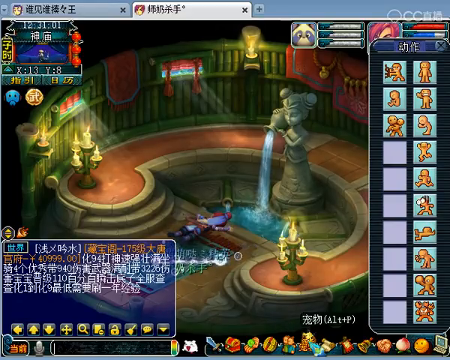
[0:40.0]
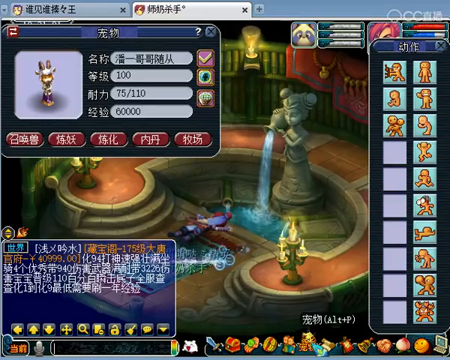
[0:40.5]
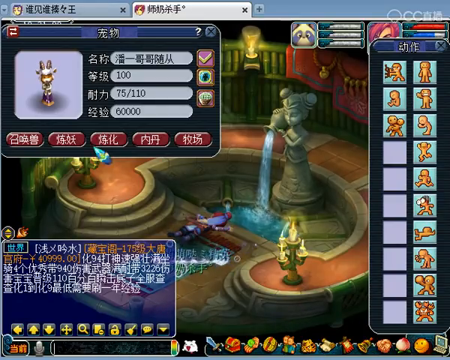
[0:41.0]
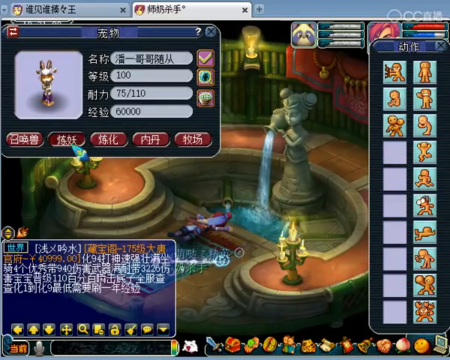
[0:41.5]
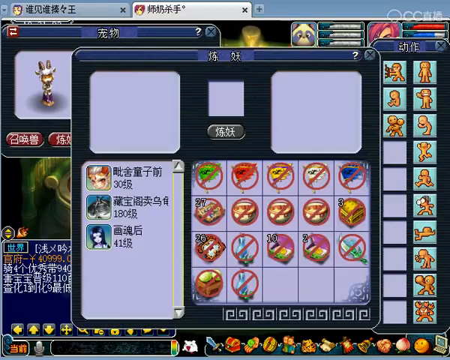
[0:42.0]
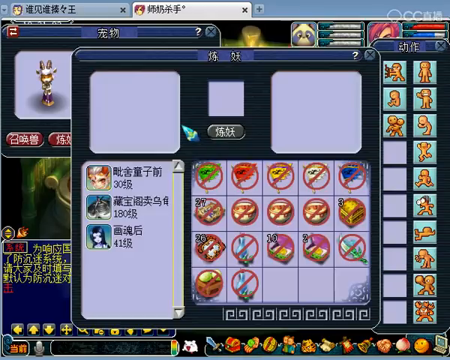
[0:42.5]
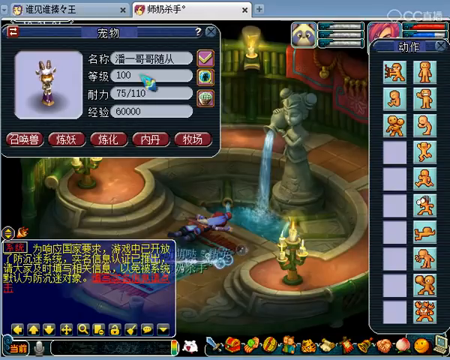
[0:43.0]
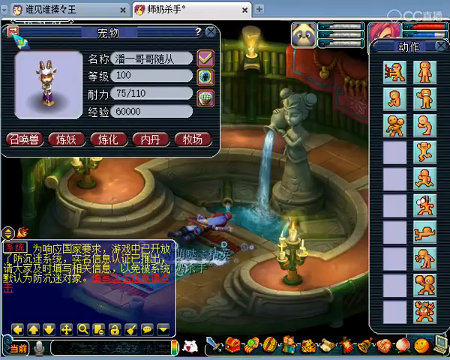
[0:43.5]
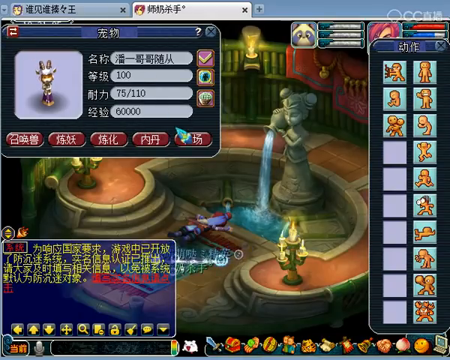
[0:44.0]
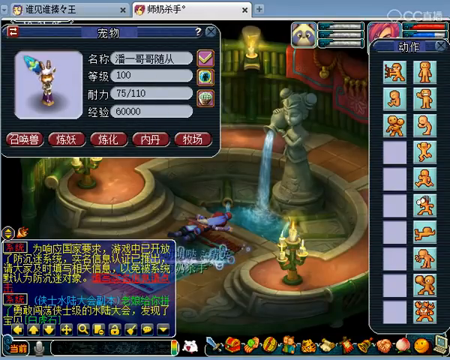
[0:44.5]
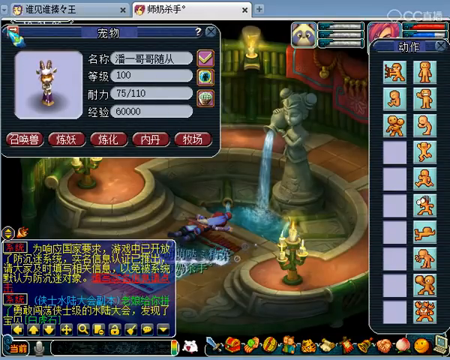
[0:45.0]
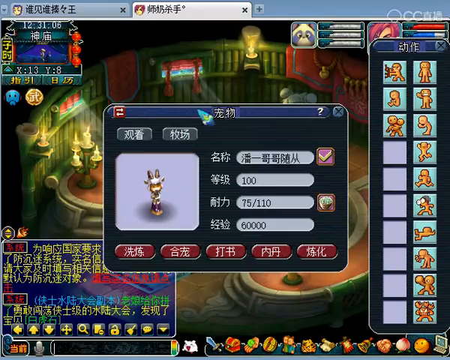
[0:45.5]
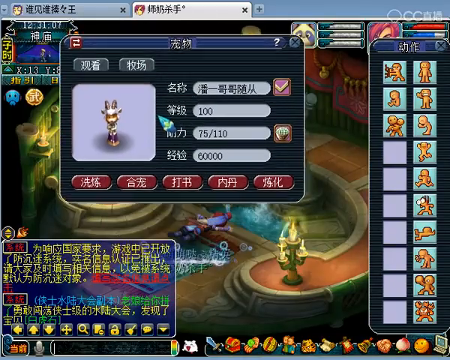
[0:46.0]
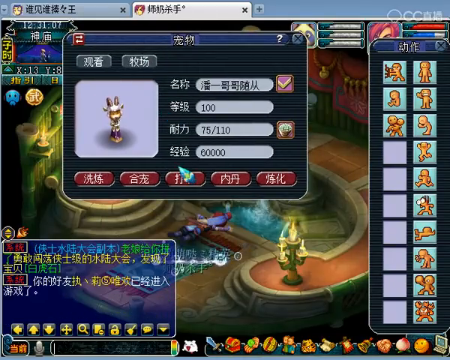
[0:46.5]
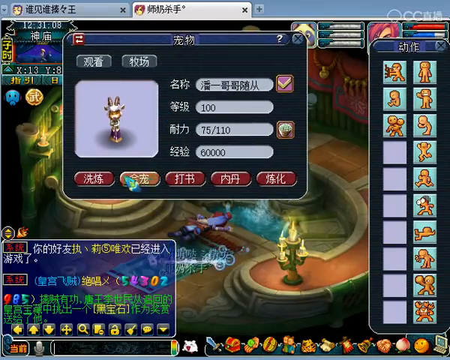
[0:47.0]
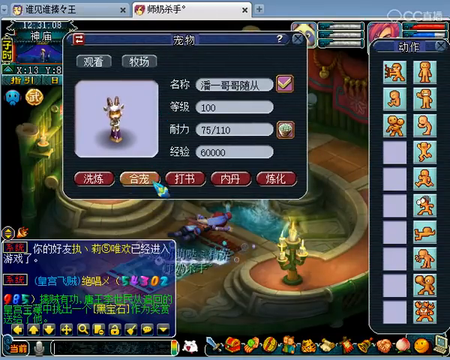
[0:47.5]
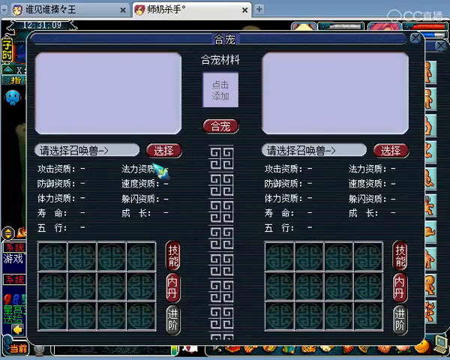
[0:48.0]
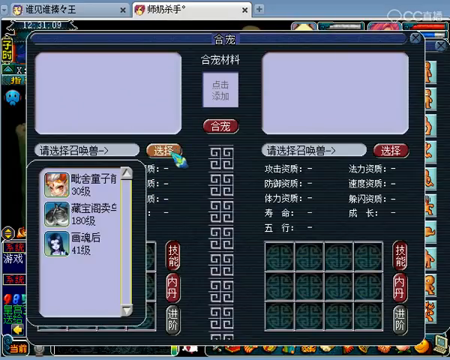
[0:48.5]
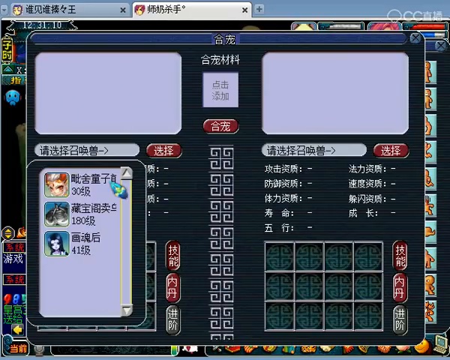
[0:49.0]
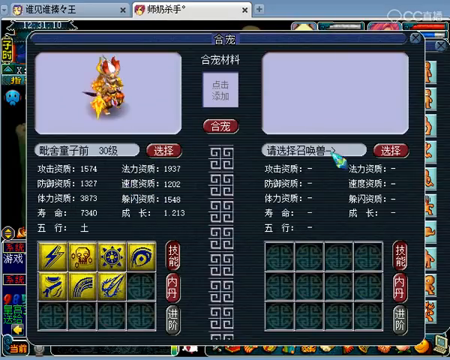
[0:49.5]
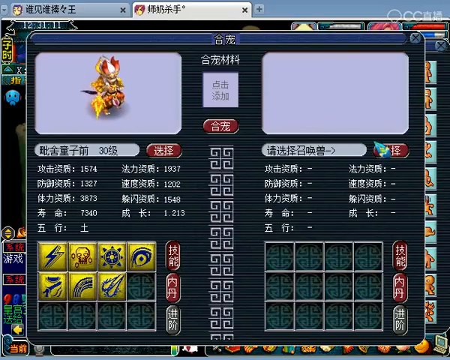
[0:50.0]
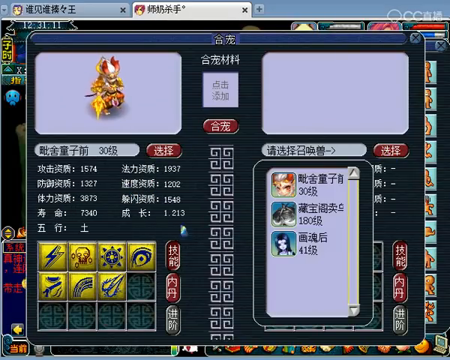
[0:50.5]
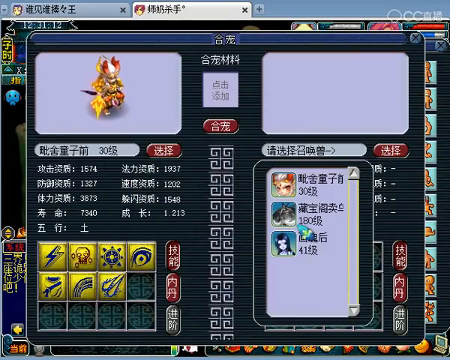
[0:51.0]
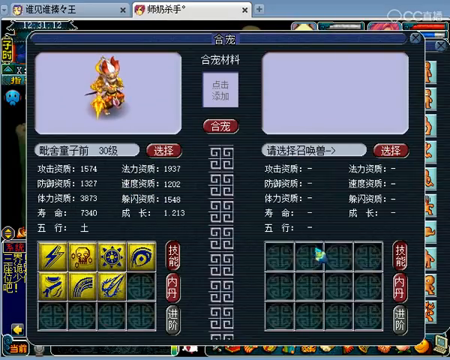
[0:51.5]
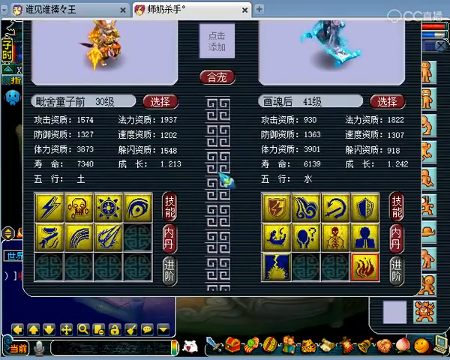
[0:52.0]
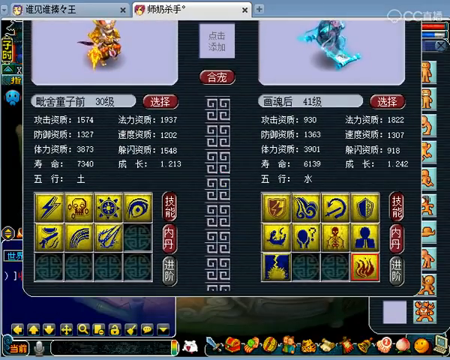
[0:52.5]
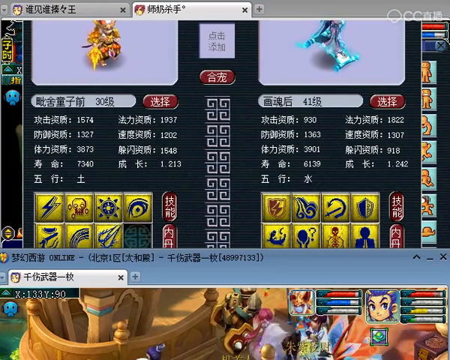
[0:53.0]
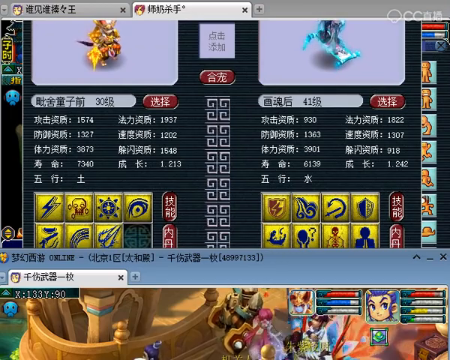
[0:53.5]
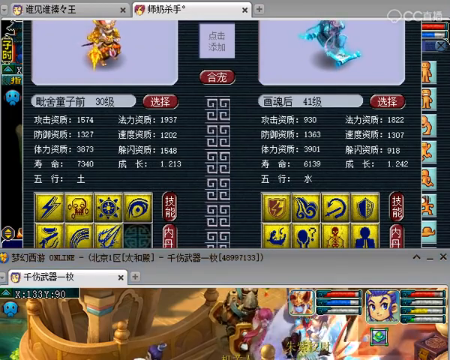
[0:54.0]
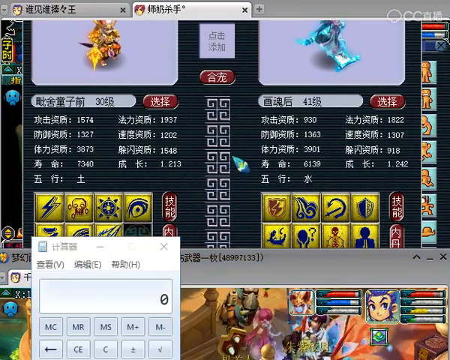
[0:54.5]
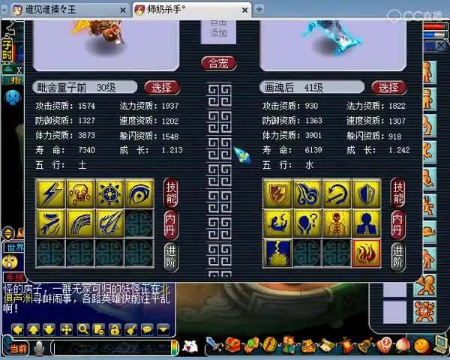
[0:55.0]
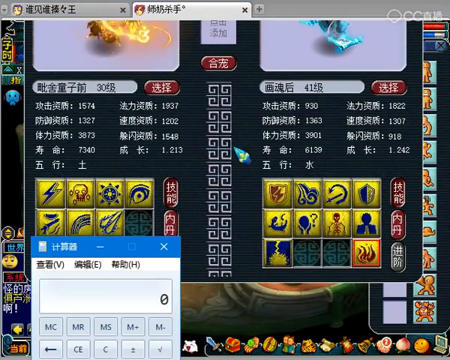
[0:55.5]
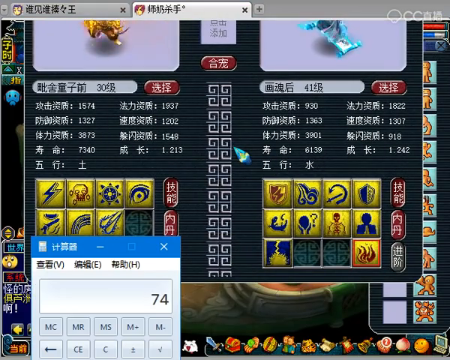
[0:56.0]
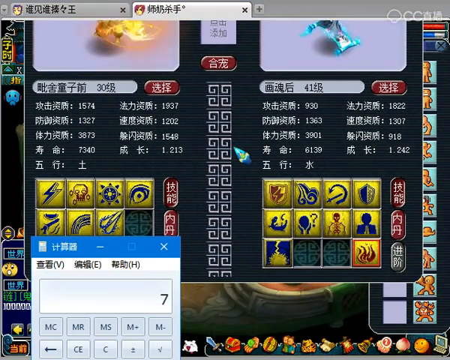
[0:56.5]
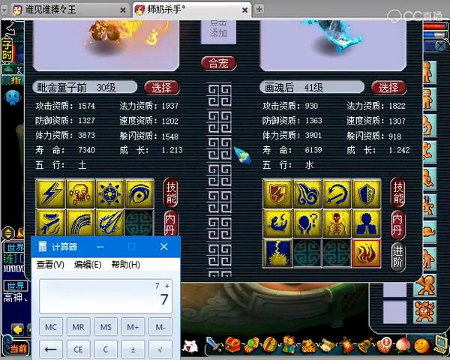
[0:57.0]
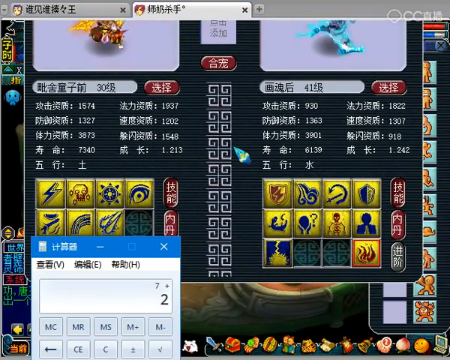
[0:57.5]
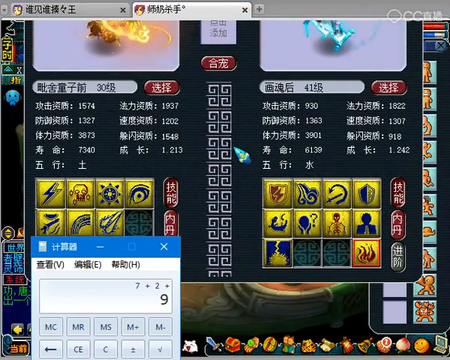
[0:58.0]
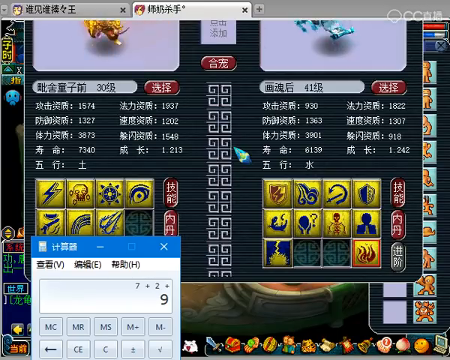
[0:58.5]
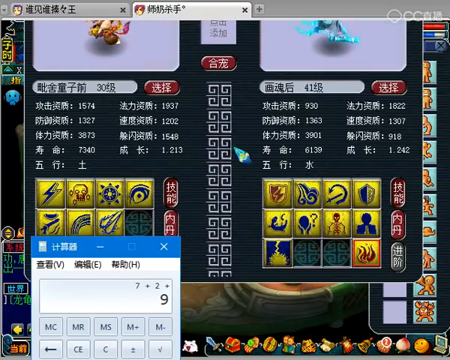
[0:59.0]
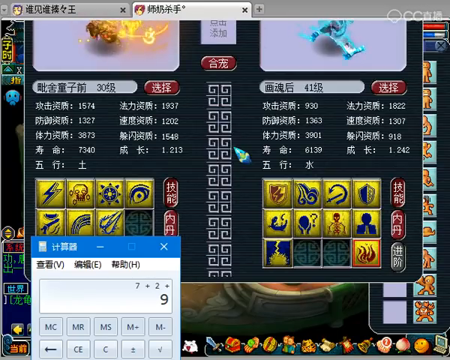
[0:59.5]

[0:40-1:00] The player character is lying on the ground, apparently after the player picked an emote from a large vertical rectangular list of emotes on the right side. The chosen emote appears to be the fourth from the bottom, in which the character falls over as if they tripped or were embarrassed. Other emotes appear to include saying hello, sitting down and moping, a baby cradle as if holding a baby, and a fist bump. The player leaves the character on the ground and continues to go through the menus, clicking on one character and then another, apparently comparing them or maybe transferring items between them. A calculator is brought up, showing the calculation 7 plus 2 equals 9.